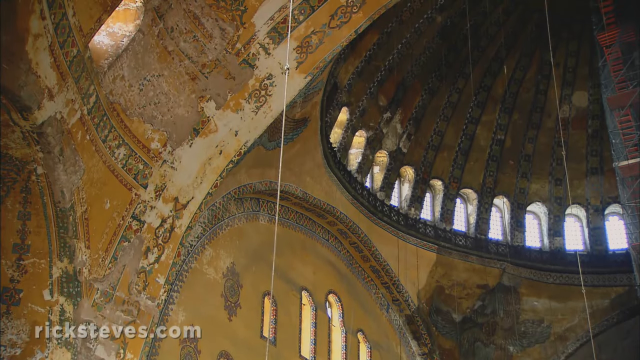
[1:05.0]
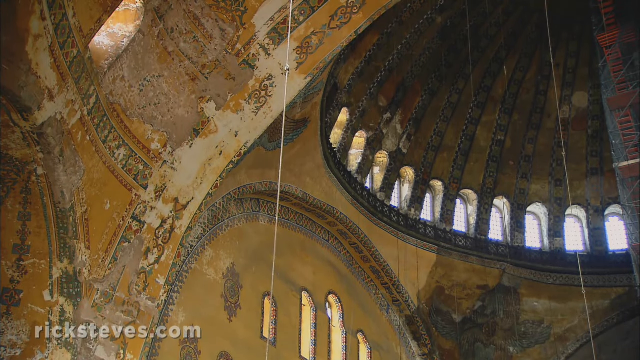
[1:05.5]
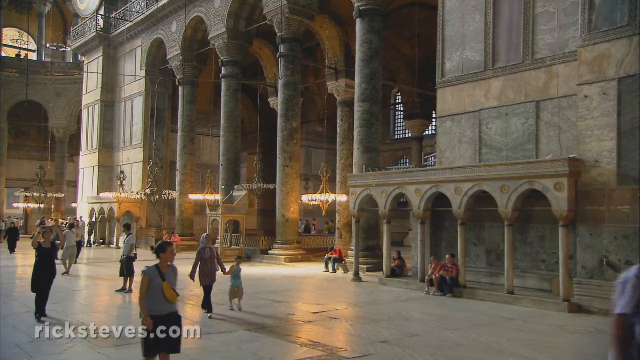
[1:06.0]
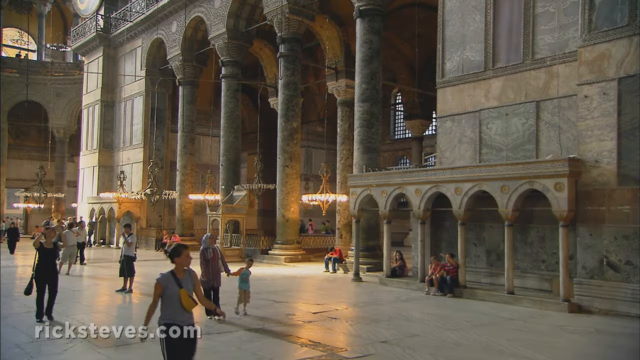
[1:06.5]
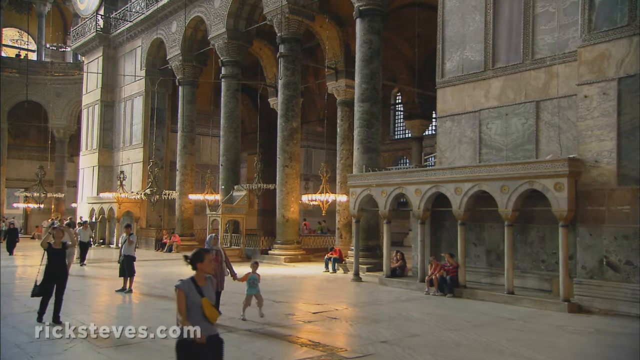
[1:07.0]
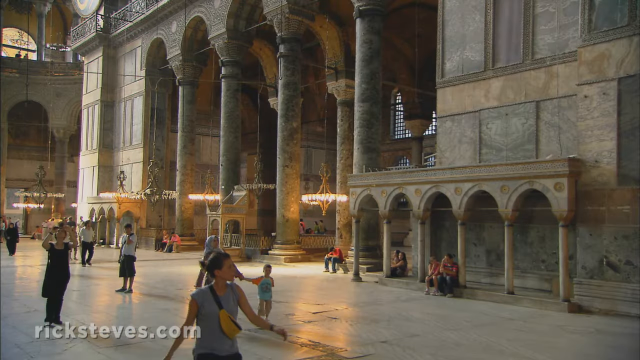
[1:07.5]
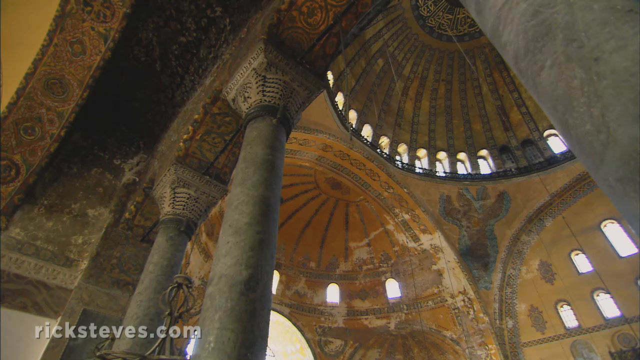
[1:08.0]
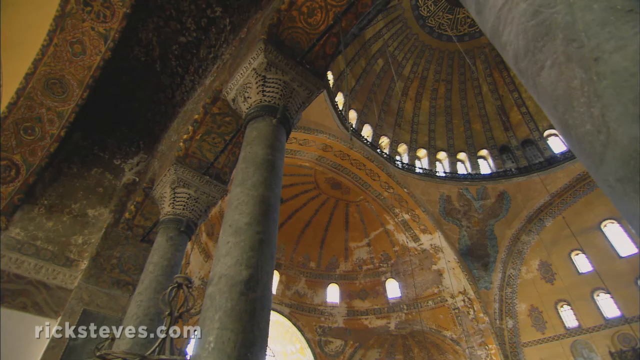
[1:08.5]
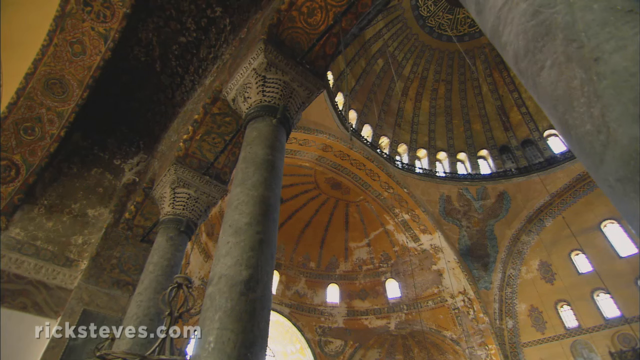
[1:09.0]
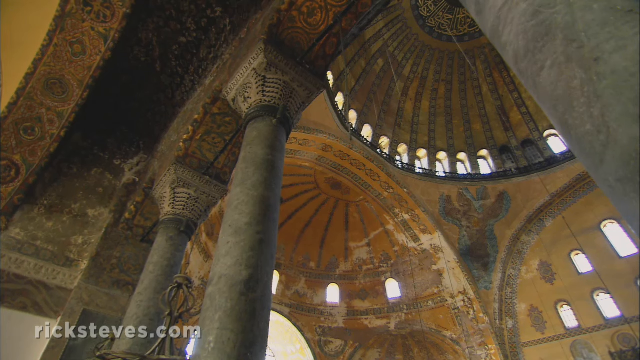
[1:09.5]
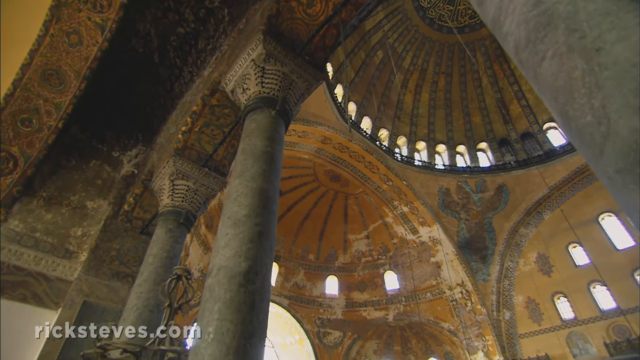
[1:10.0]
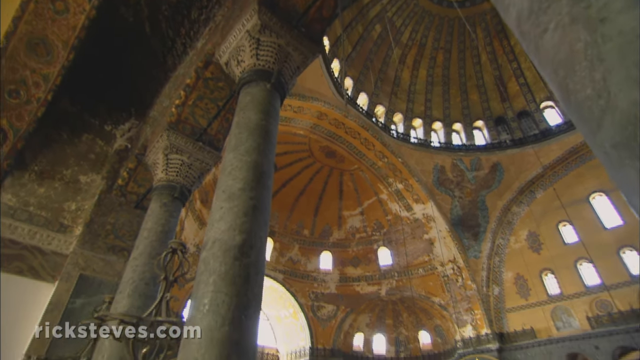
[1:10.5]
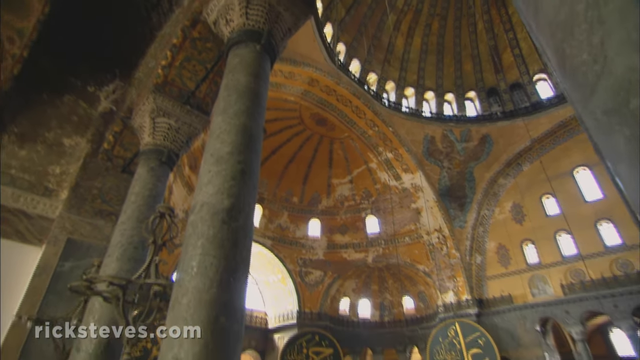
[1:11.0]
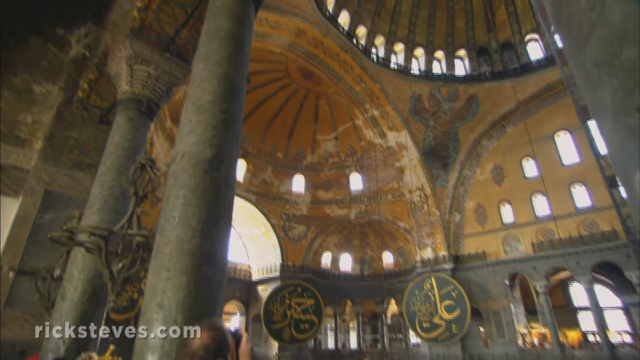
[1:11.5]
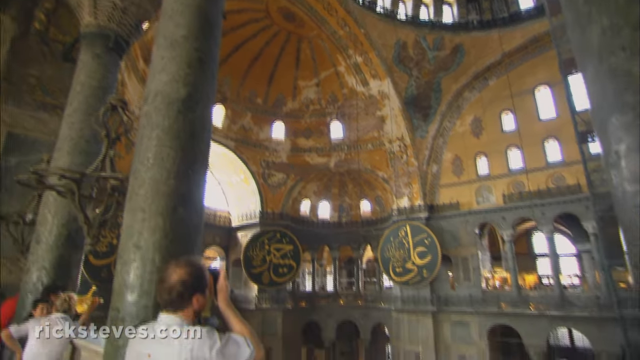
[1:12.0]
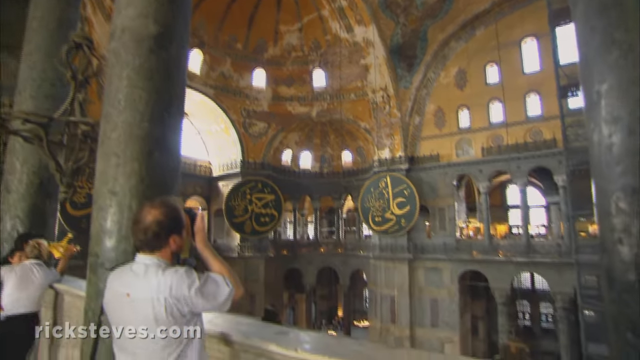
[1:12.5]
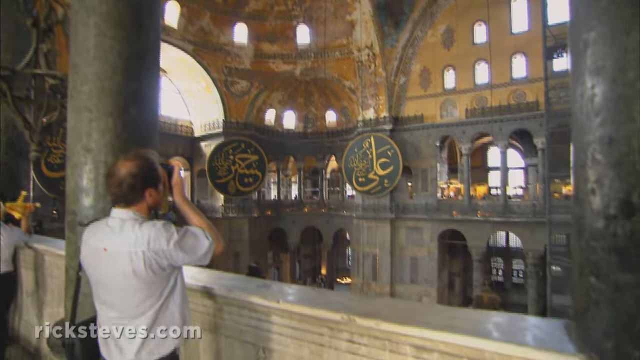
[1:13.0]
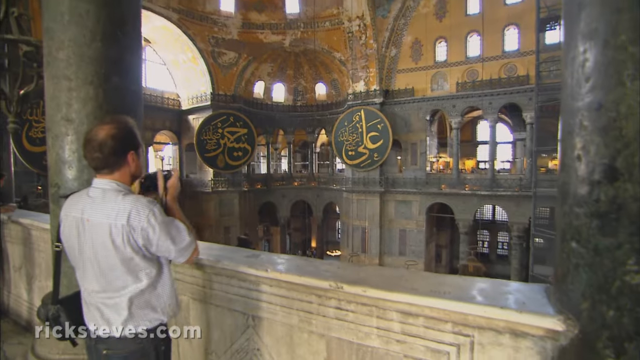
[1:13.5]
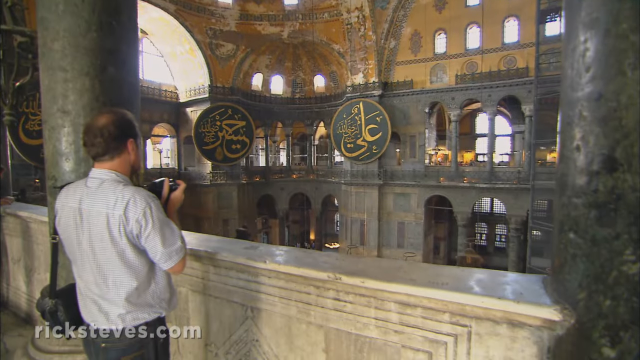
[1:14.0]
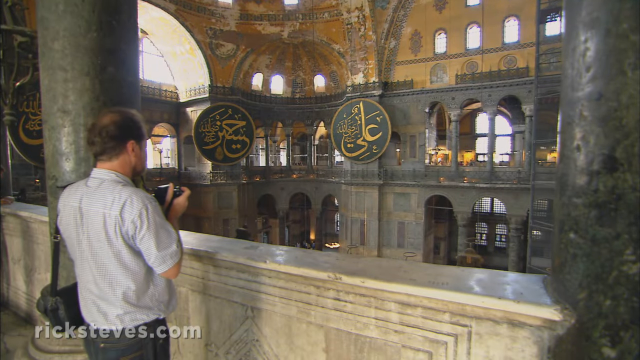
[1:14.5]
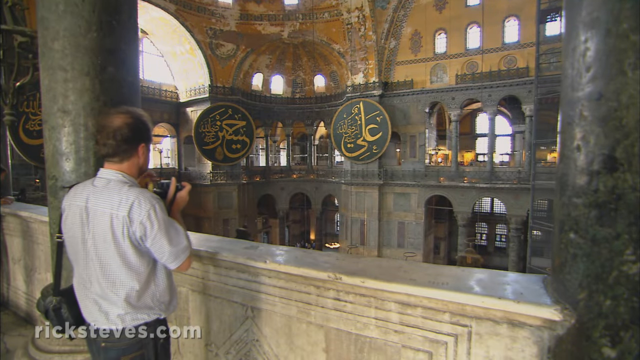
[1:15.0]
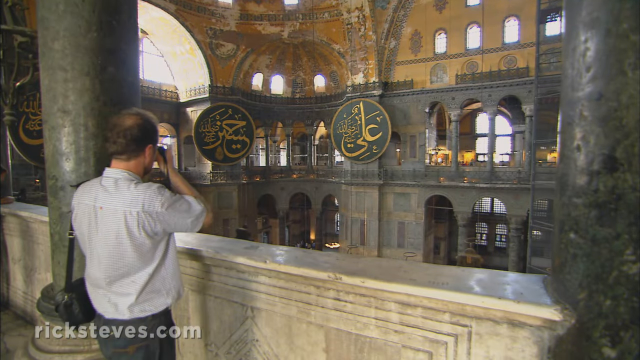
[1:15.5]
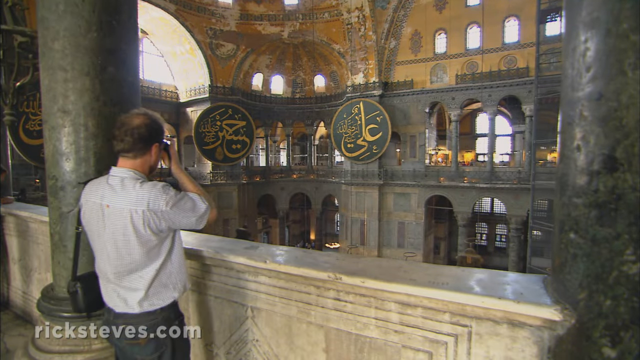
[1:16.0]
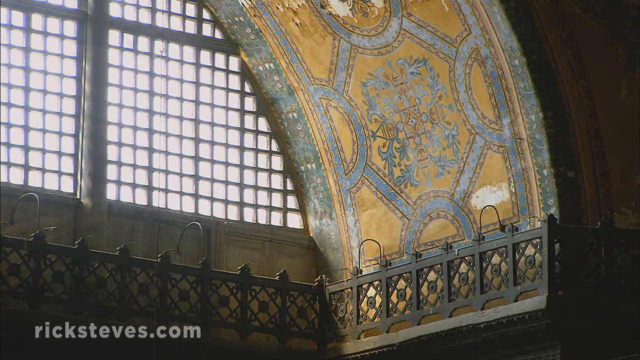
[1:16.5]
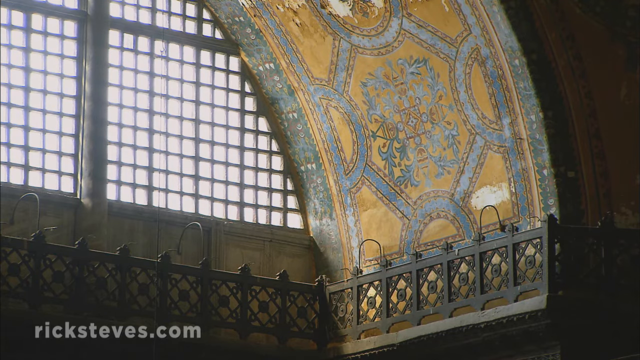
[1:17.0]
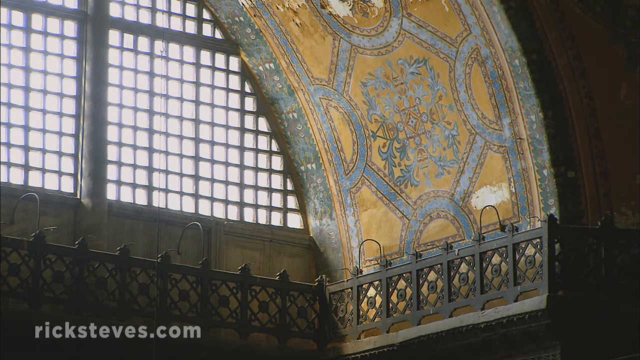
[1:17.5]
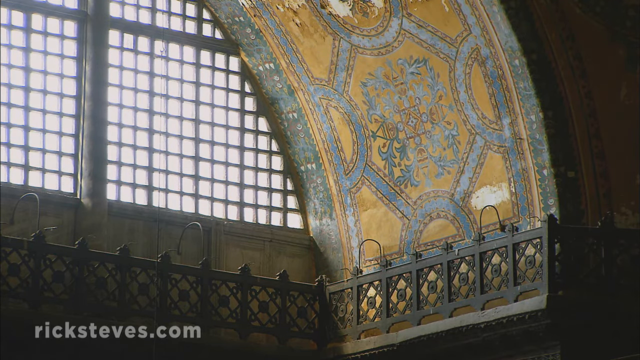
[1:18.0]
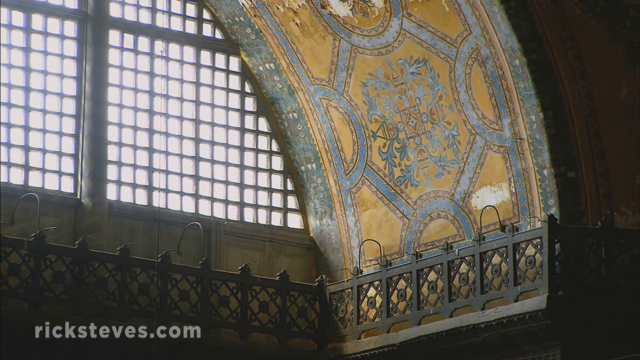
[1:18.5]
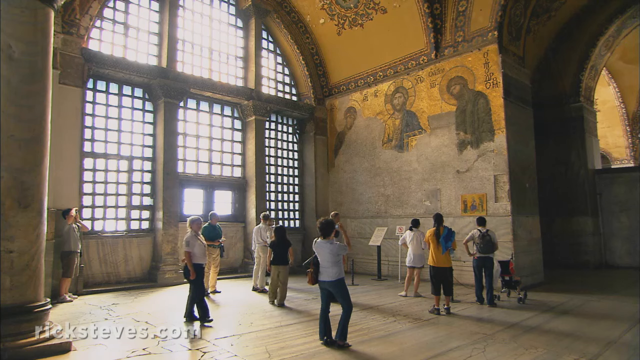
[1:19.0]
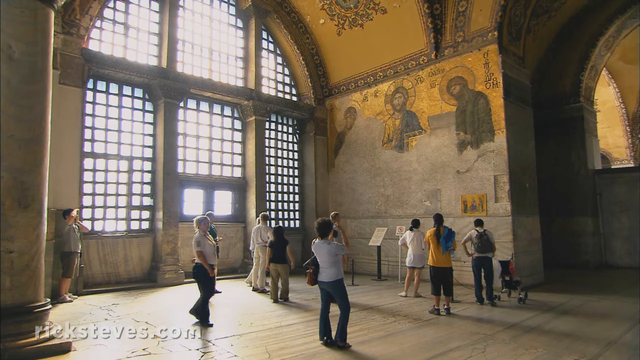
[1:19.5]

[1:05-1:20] The camera pans down to tourists on the ground looking up and taking pictures, while some sit and admire the view. Another shot shows the pillars supporting the building, with intricate designs where each pillar connects to the second layer. There is what appears to be a metal chandelier. A person takes pictures with a nice camera. An intricate, very symmetric floral design in blue, green, yellow and red decorates the building. At the end, scraped-off pictures of three figures appear, apparently Jesus Christ with apostles, or possibly just three apostles; the lettering seems to be Greek rather than Arabic, and the imagery looks Christian.